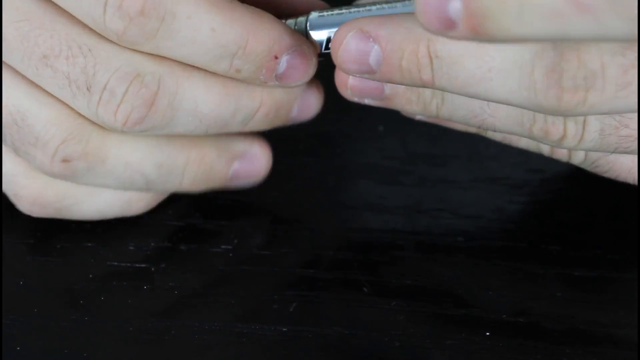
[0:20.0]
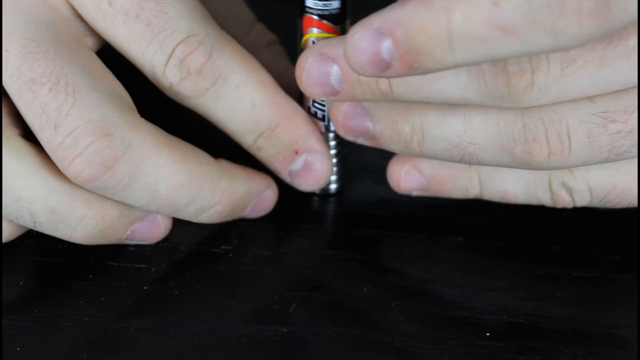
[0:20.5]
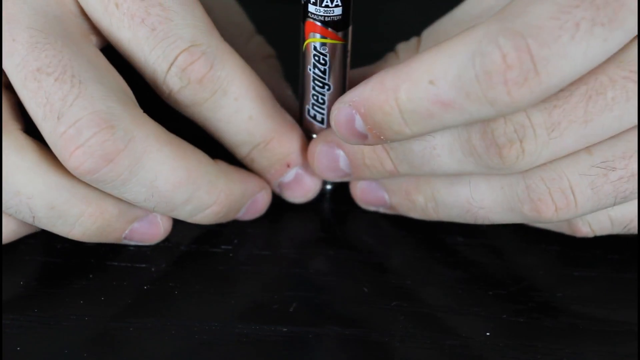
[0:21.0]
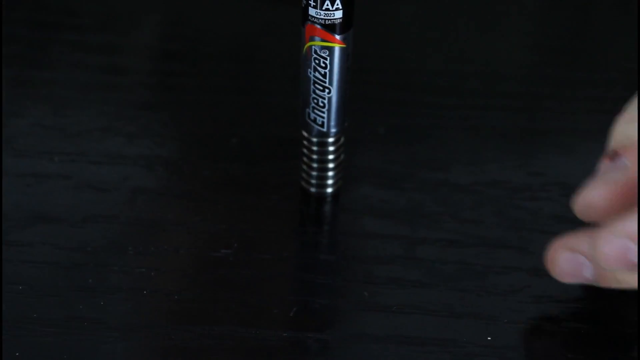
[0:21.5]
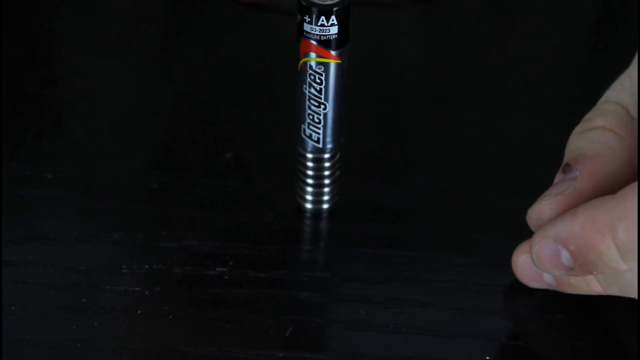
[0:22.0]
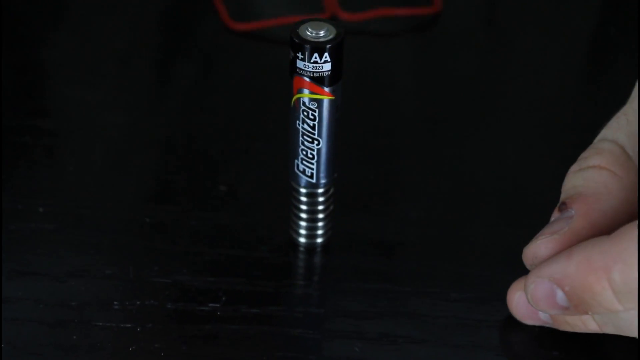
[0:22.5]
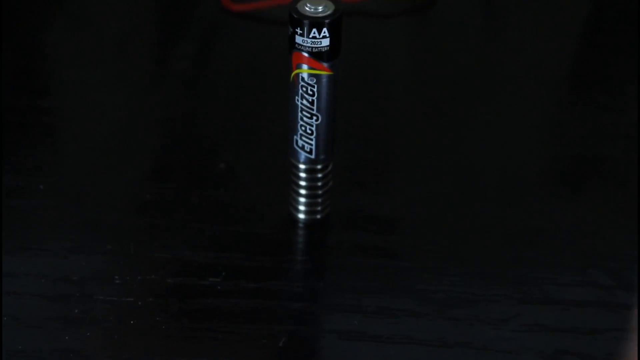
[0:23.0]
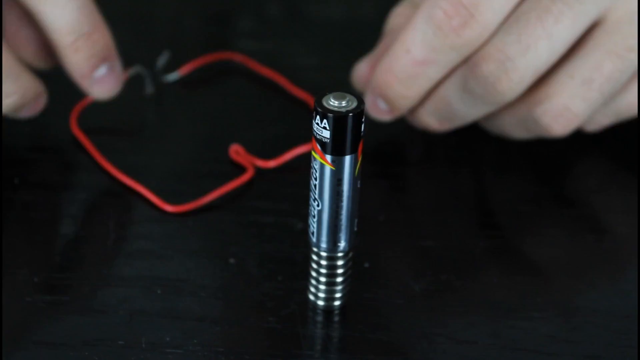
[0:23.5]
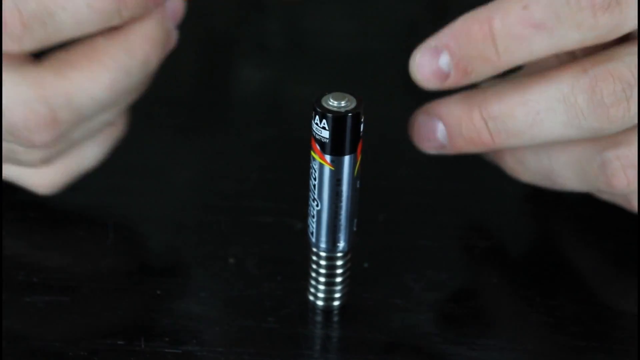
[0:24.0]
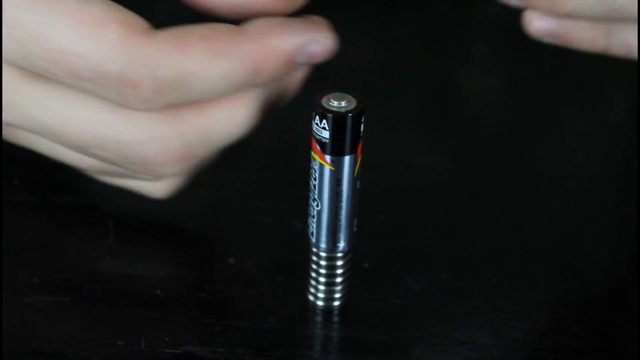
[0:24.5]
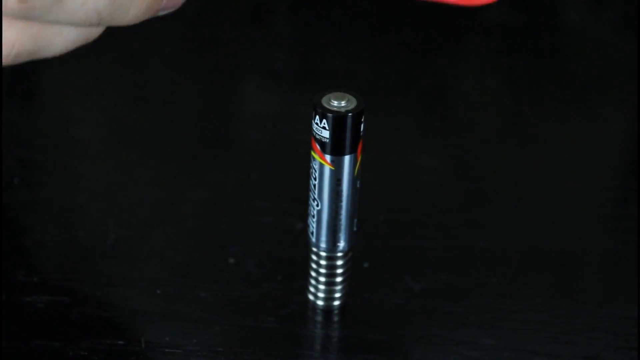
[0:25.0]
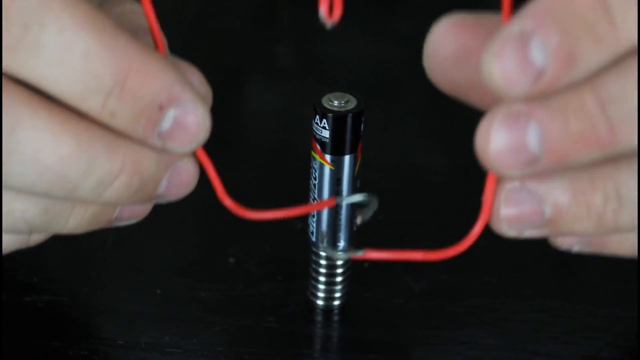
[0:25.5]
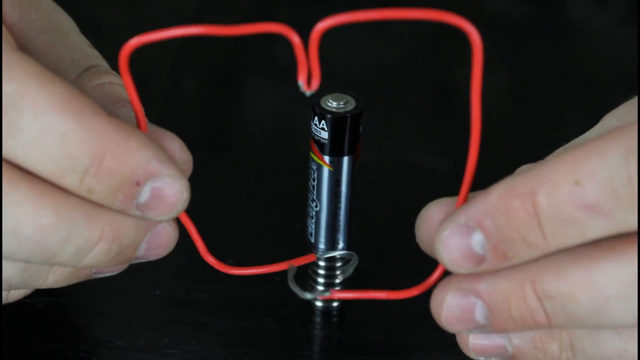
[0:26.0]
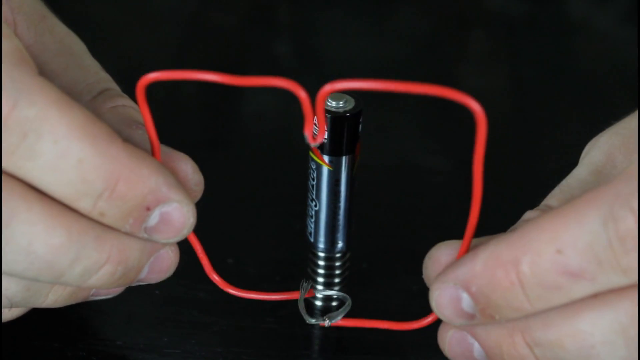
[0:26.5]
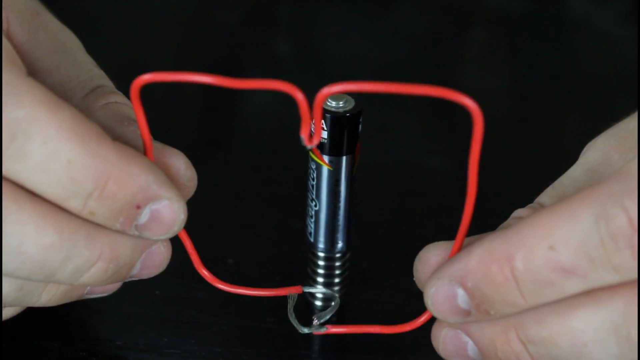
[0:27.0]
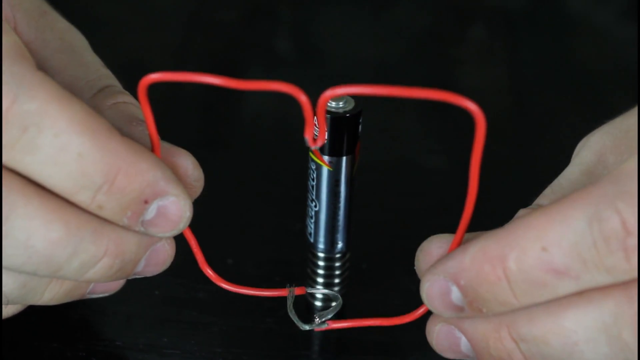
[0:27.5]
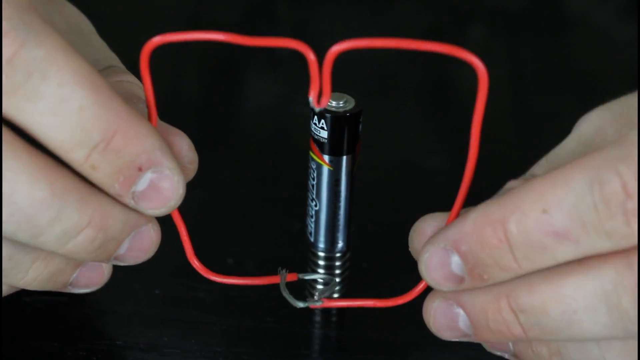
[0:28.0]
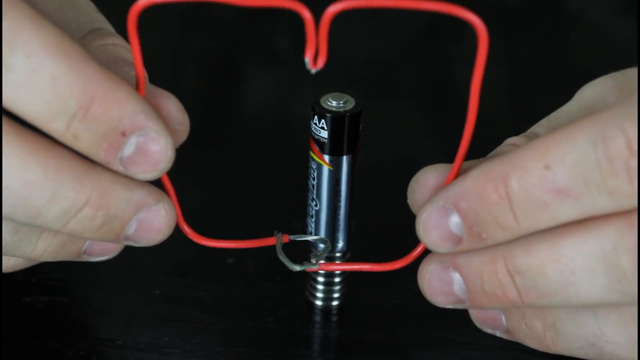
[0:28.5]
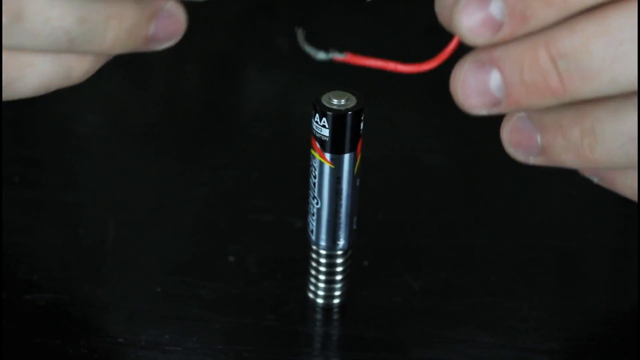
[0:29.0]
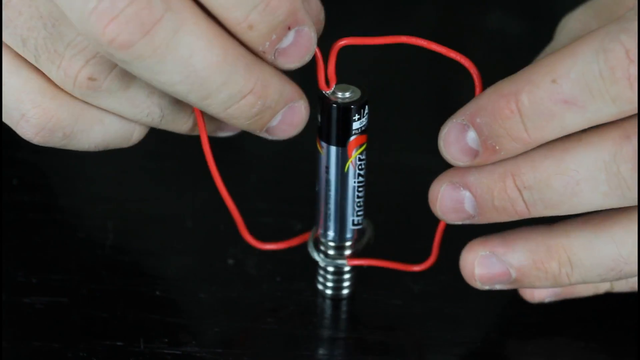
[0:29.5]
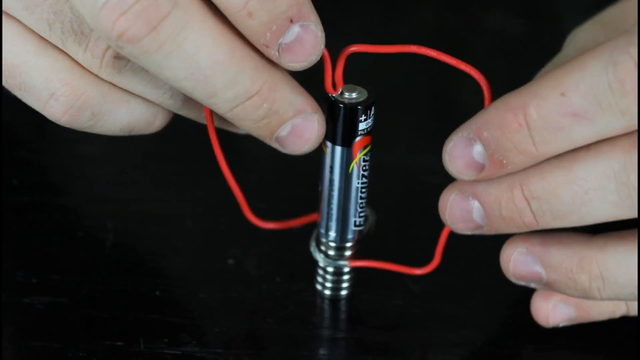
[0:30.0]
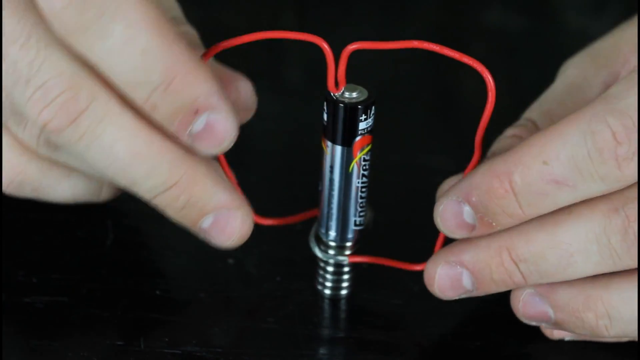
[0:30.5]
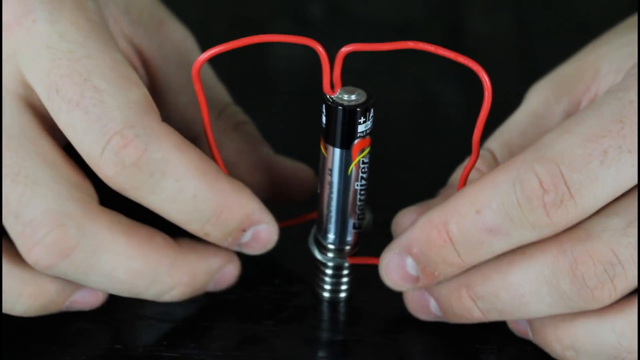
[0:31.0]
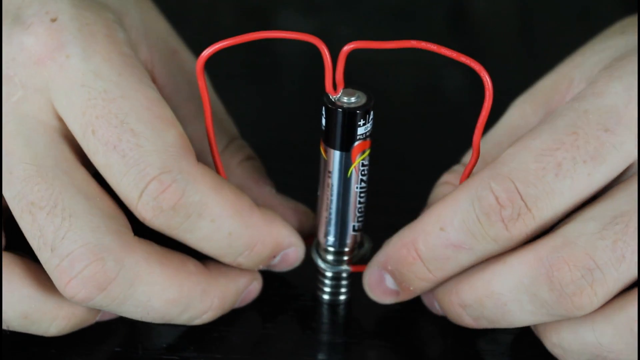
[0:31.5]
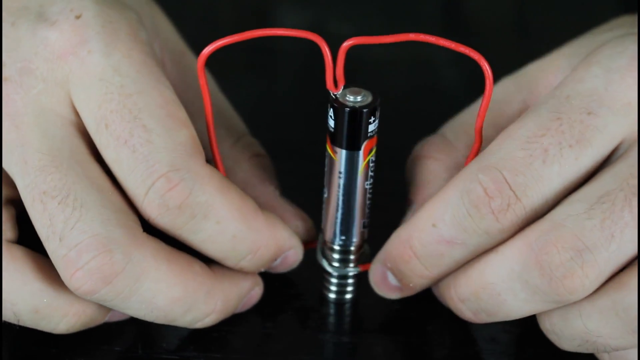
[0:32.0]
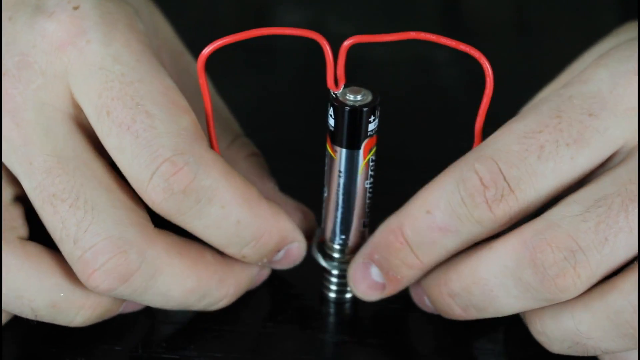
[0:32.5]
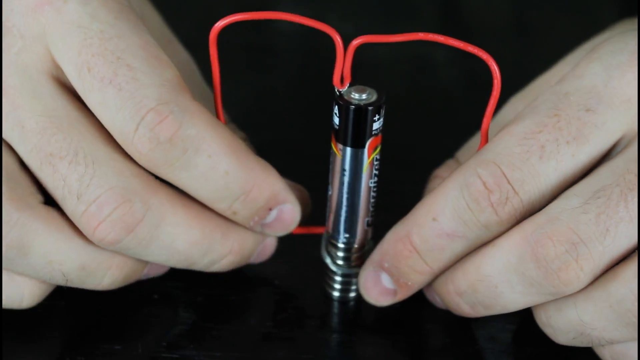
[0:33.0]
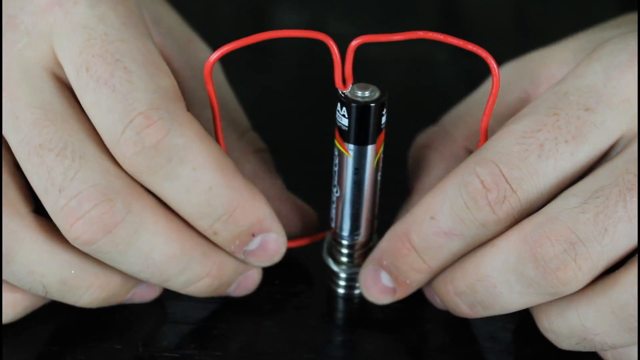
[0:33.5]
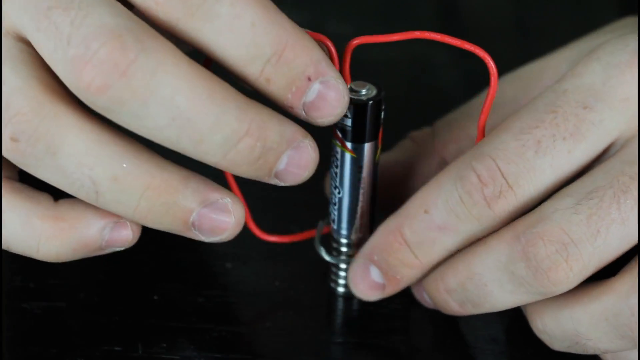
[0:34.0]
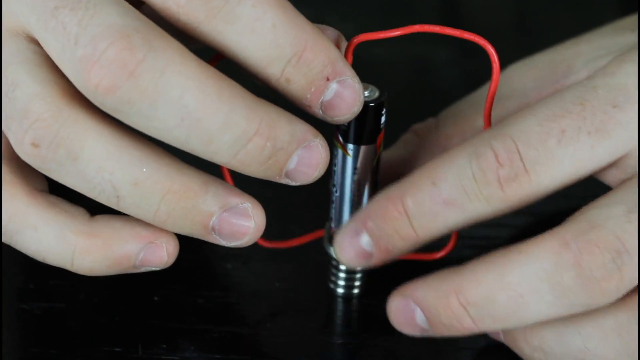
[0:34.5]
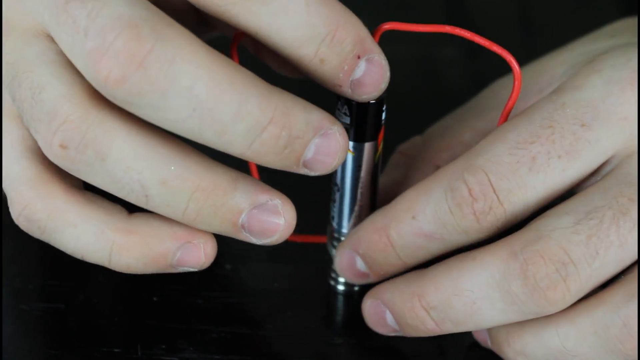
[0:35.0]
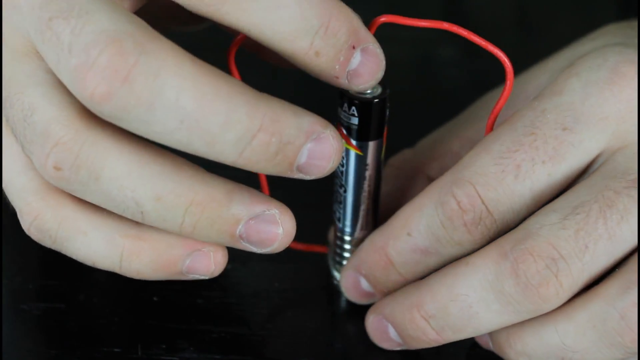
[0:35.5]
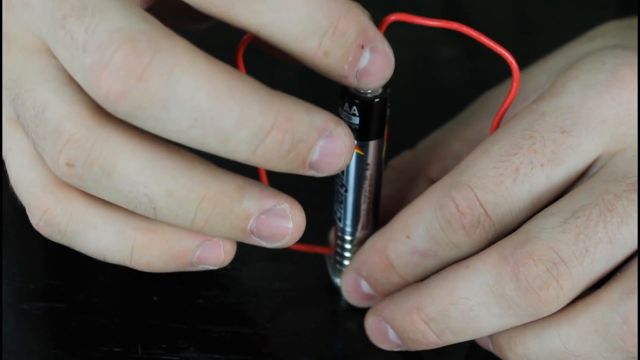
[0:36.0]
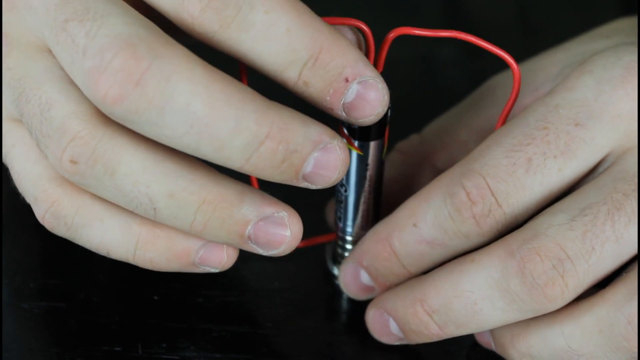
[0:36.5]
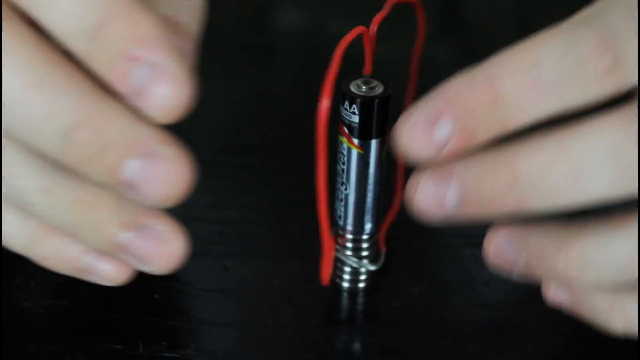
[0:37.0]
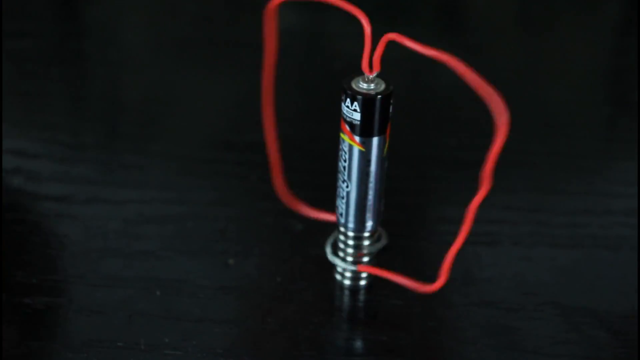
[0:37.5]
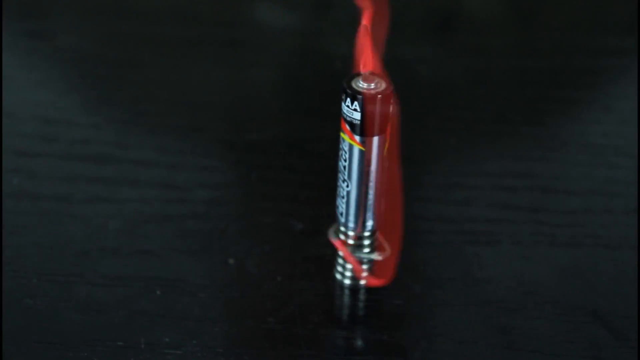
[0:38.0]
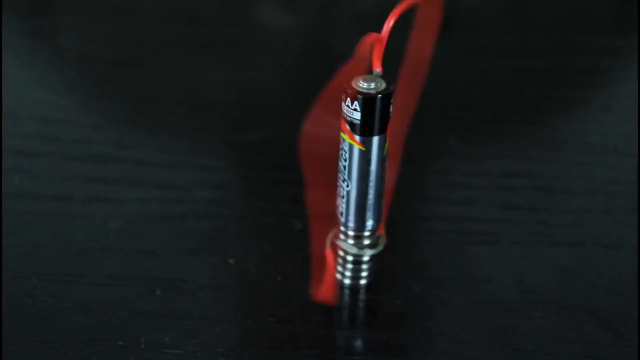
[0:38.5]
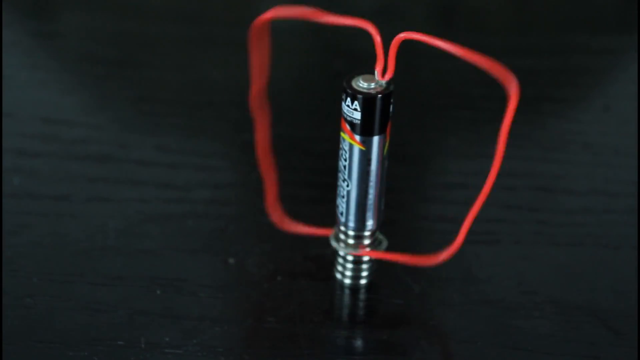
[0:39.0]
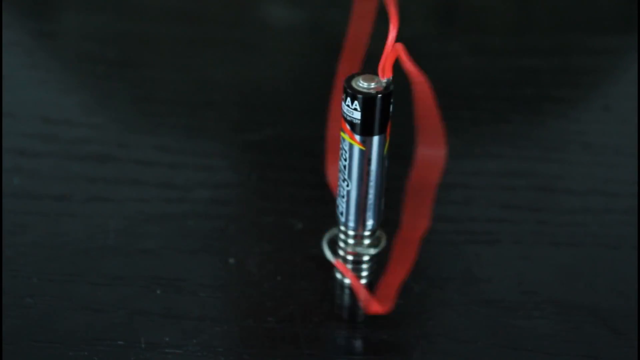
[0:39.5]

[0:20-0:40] The man appears to put another battery on the bottom of the Energizer battery; it has lines going across it and is about a third of the size of the Energizer battery. An AA battery can be seen. Using both hands, he wraps the red wire around the Energizer battery and the bottom part of the battery as well, and the wire kind of looks like the shape of butterfly or moth wings. He clips it to the top, to the positive side, and once it is on the battery the wire starts spinning, apparently clockwise, to the right. The desk or surface he is using is completely black. The man is Caucasian, and his nails are cut very short.